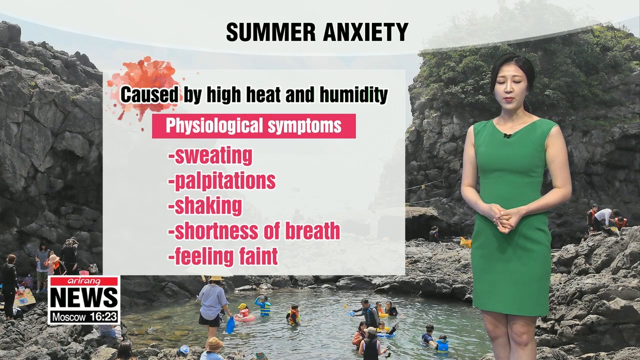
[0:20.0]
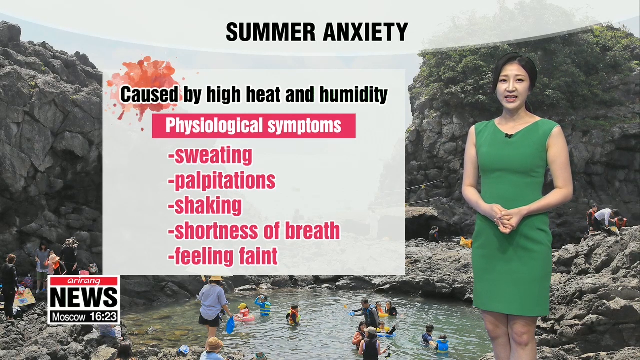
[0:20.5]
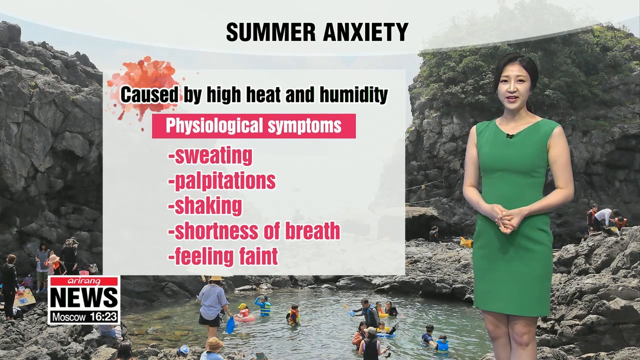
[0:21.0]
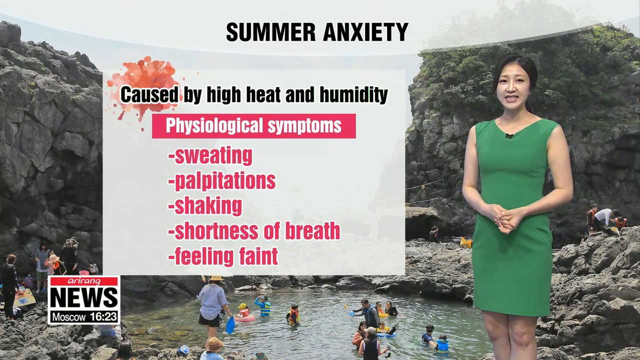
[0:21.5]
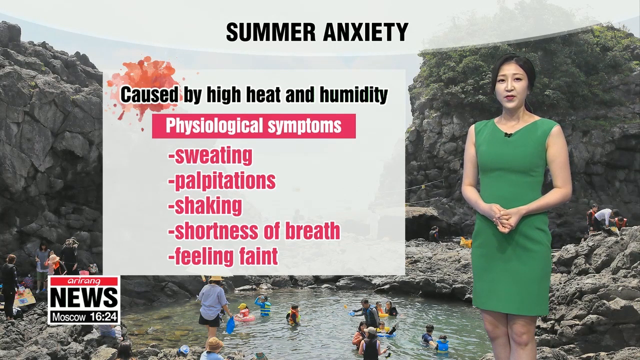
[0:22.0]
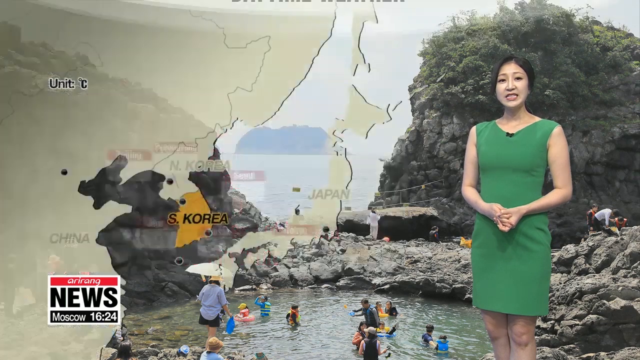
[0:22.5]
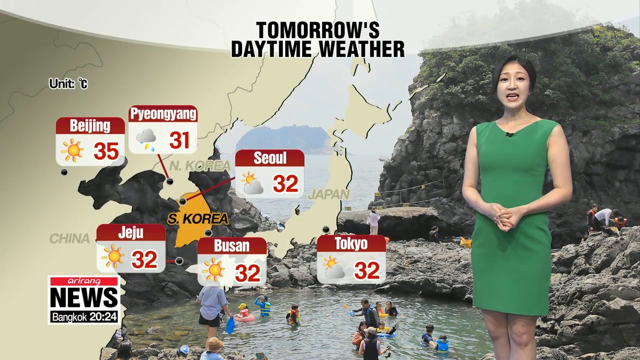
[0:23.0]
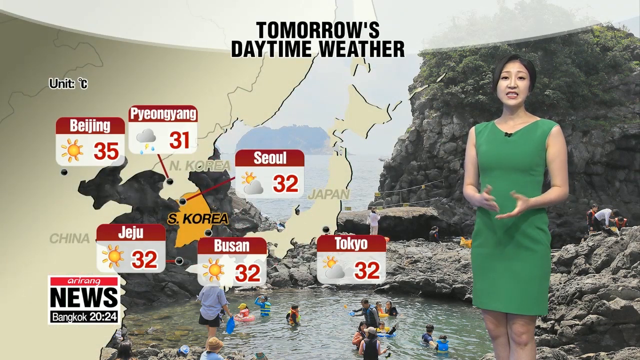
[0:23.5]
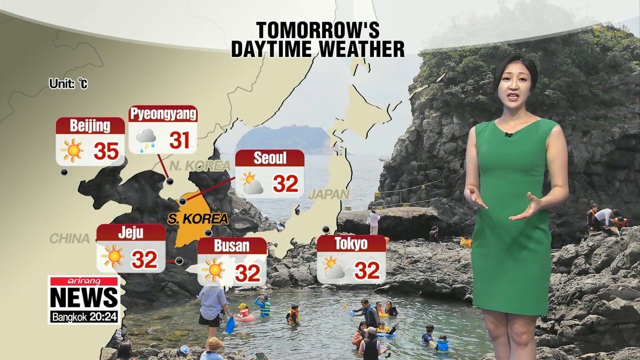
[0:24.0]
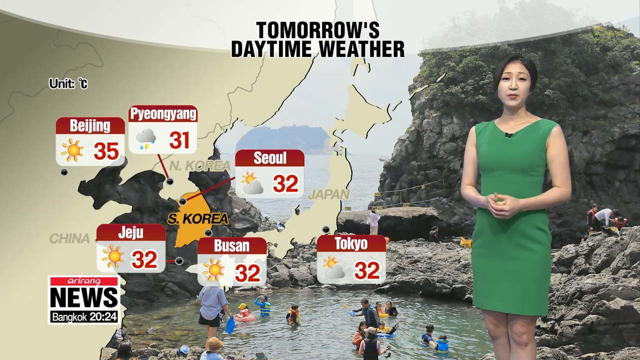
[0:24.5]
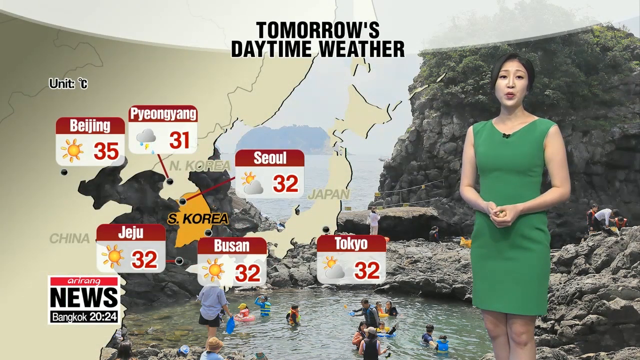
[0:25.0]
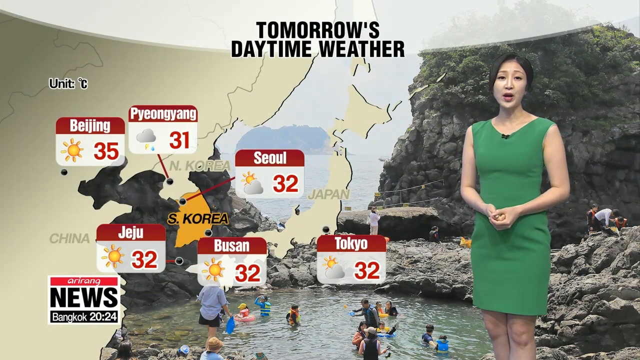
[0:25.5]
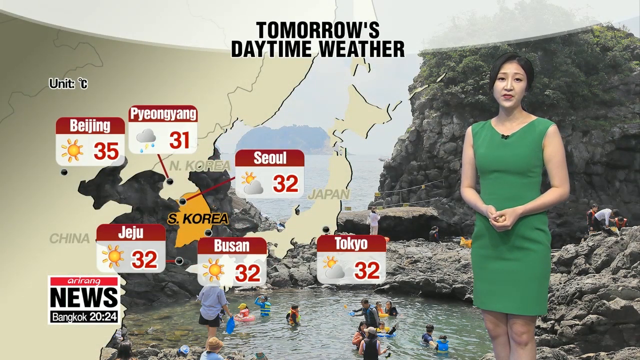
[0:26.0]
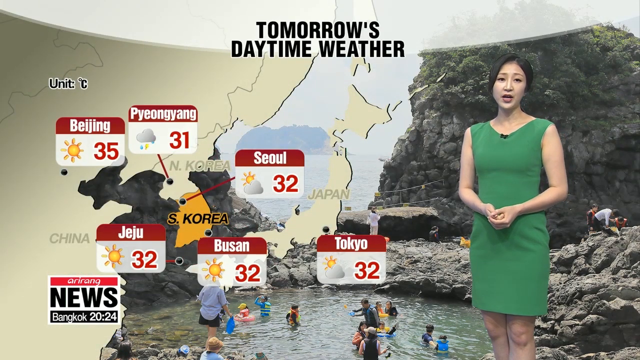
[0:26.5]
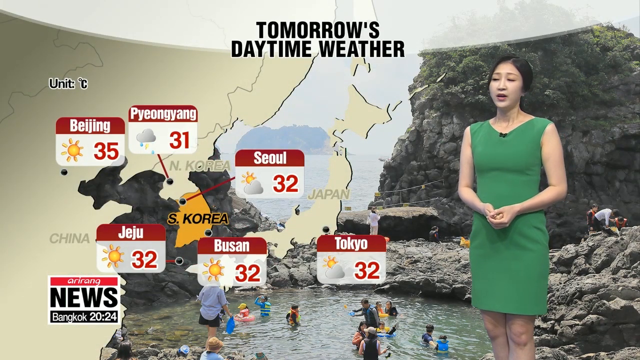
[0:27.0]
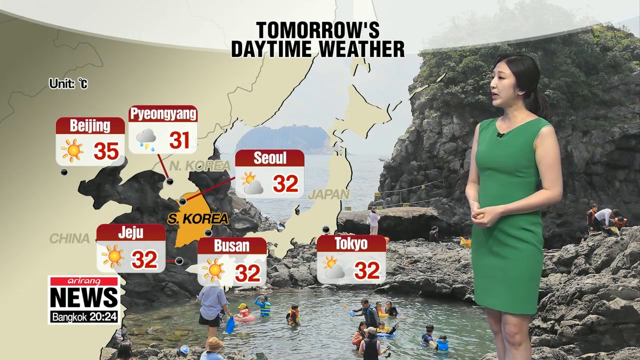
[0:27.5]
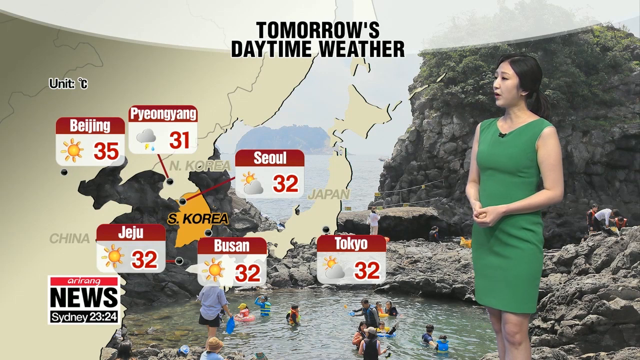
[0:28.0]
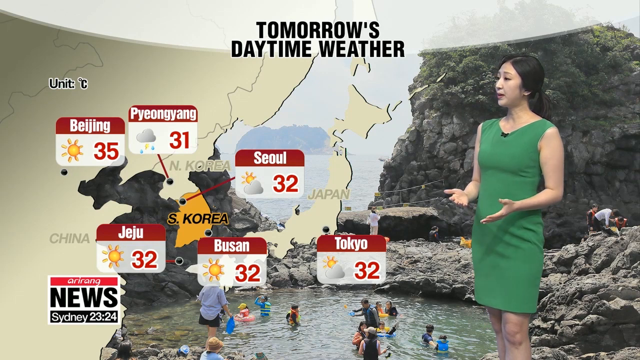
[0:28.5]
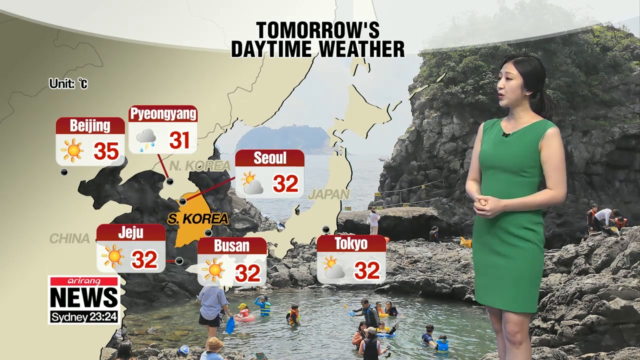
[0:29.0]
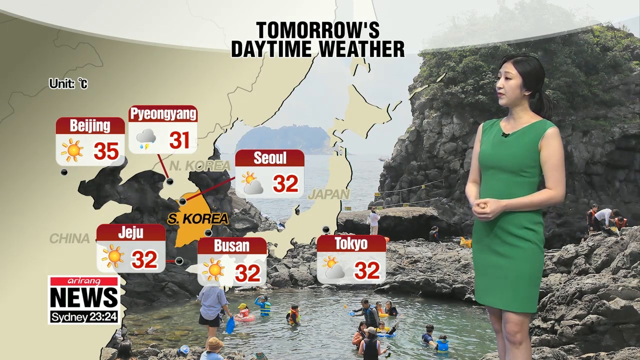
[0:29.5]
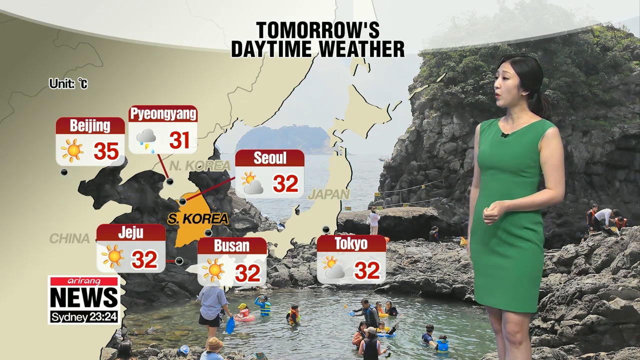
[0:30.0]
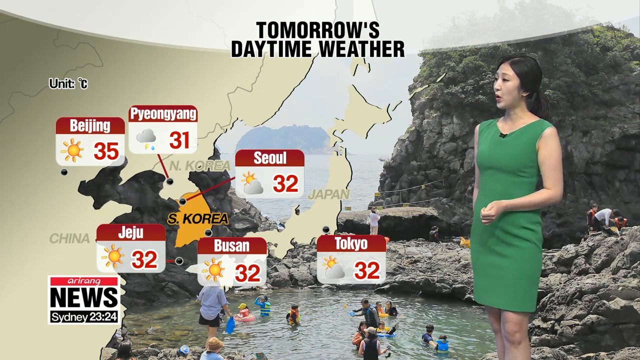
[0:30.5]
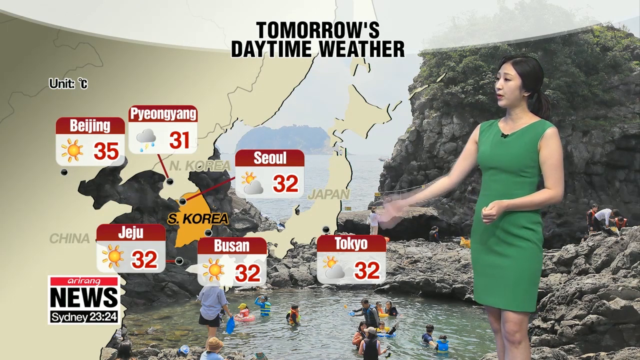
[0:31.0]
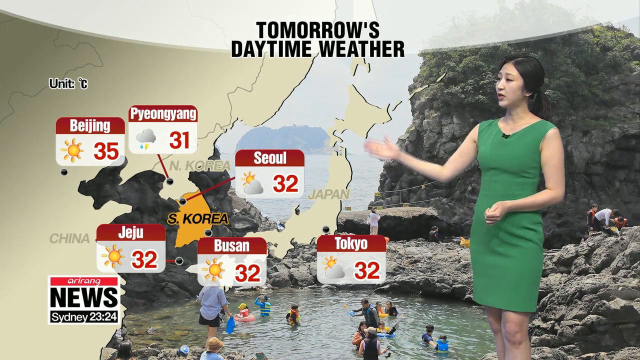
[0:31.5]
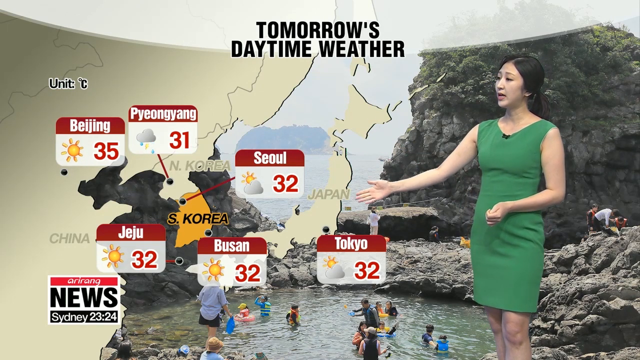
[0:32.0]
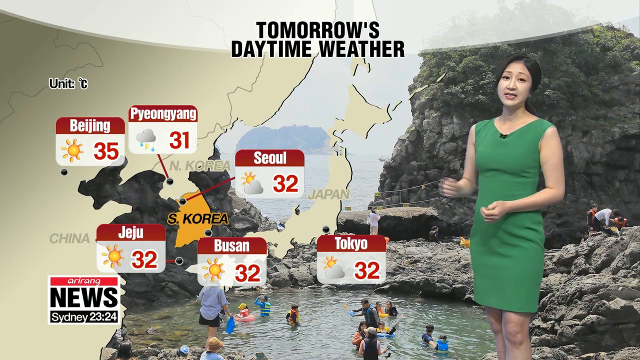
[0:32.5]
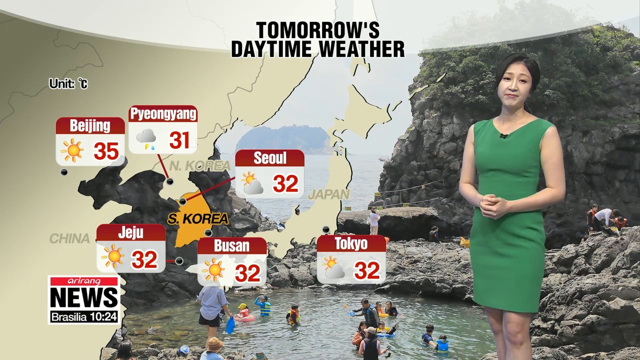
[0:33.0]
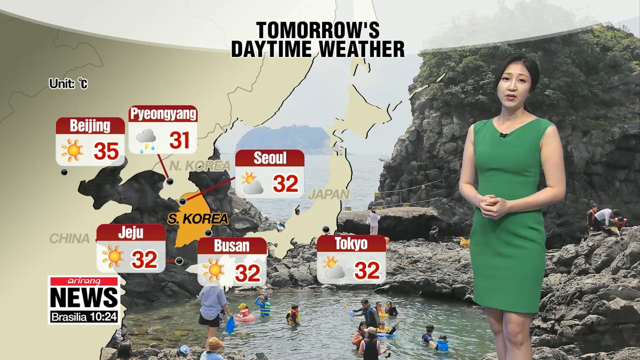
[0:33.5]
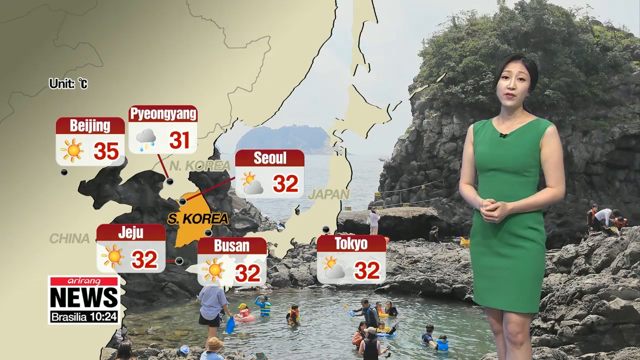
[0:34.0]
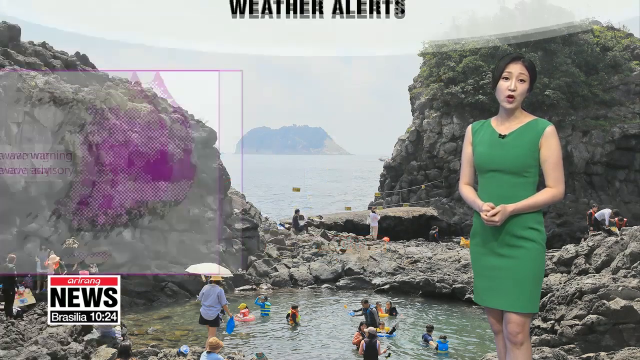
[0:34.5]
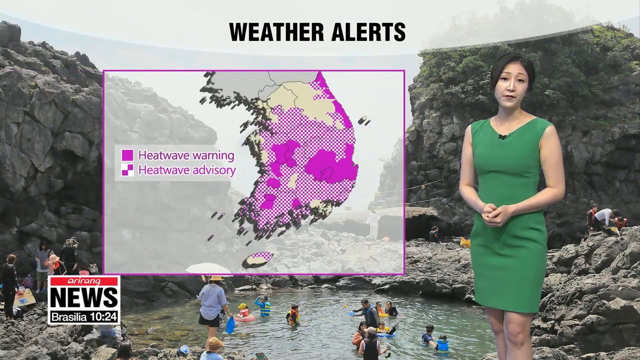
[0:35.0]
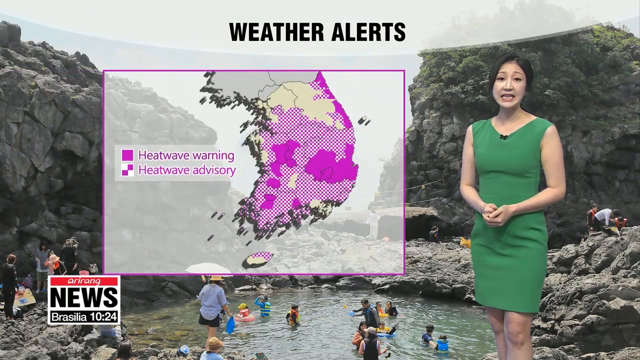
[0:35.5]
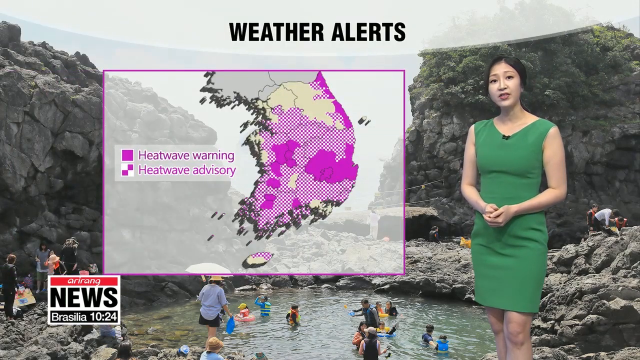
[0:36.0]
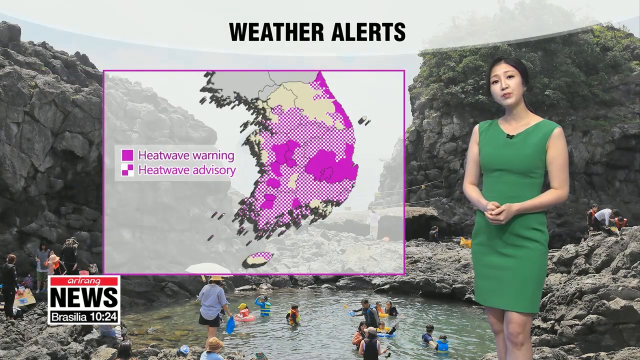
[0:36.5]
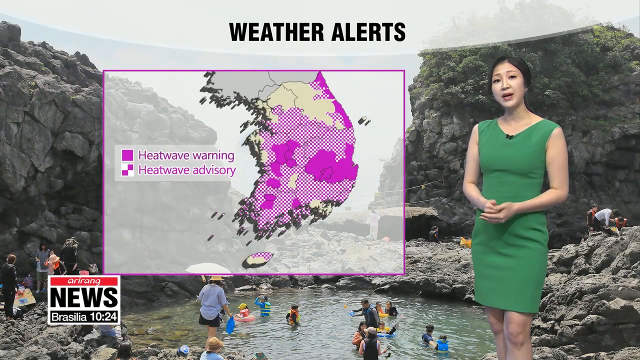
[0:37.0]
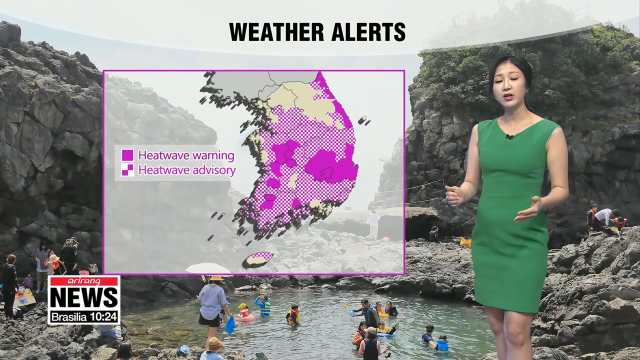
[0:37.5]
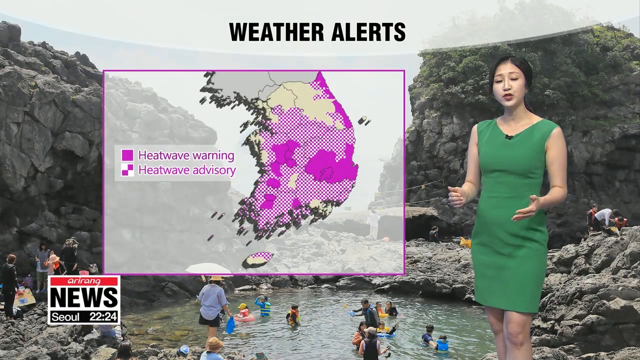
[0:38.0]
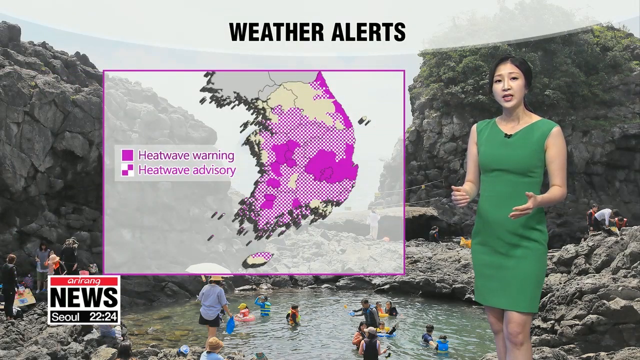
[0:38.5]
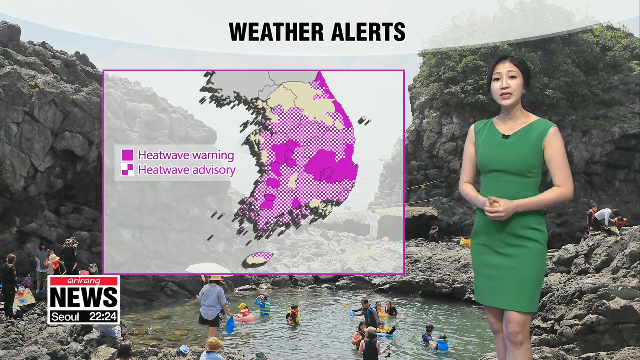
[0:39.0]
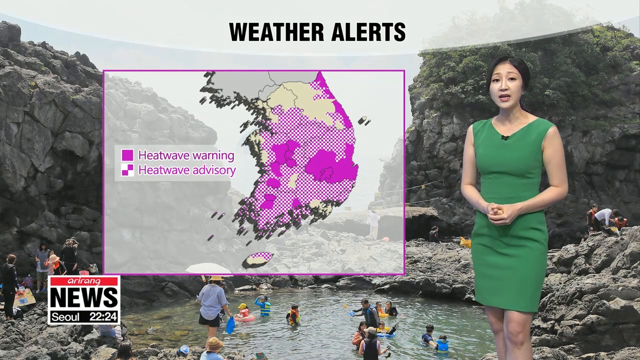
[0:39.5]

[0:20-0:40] The TV presenter moves on to tomorrow's daytime weather report, which shows different places: Beijing at 35 degrees, Busan at 32 degrees, Tokyo at 32 degrees, and Jaegu and Seoul. Each place has its own temperature. The lady explains with her hands as she goes through the report. The name Korea is also written on the map, with a bit of yellow behind it.